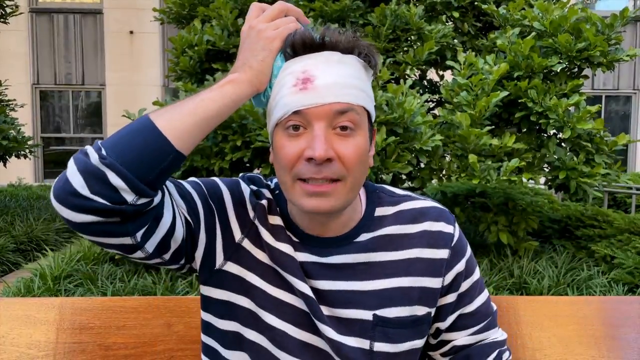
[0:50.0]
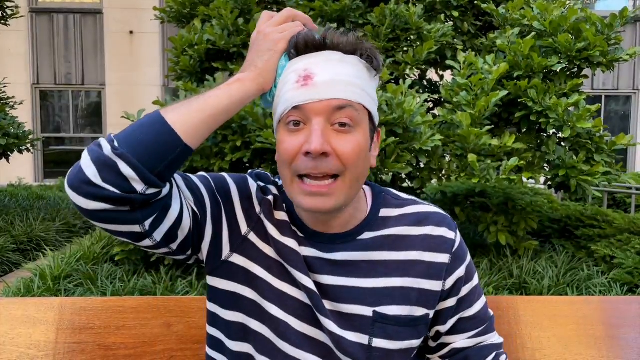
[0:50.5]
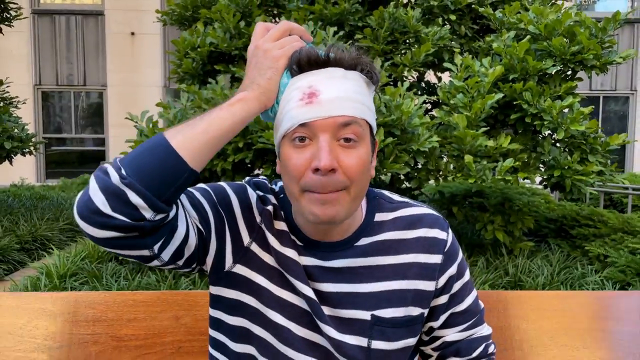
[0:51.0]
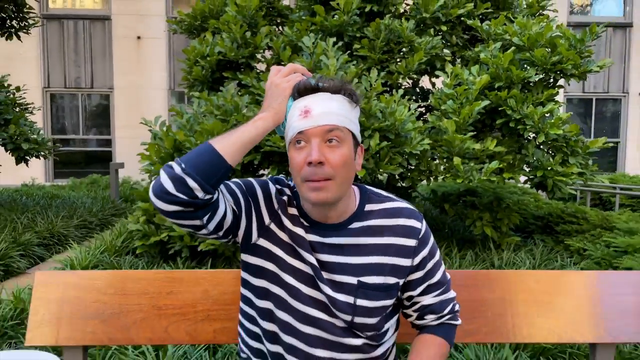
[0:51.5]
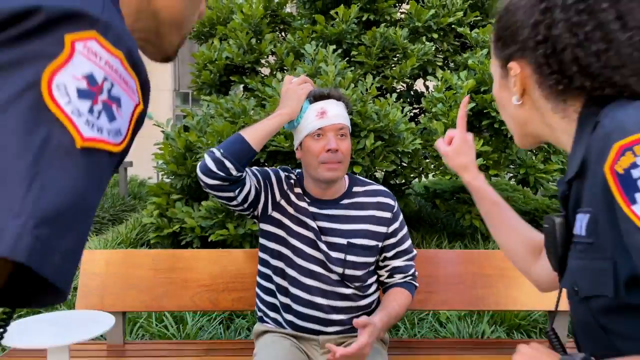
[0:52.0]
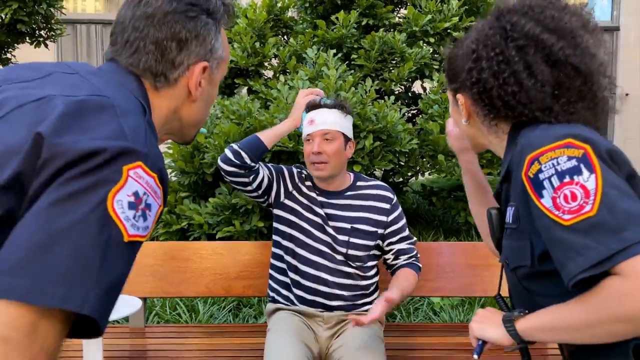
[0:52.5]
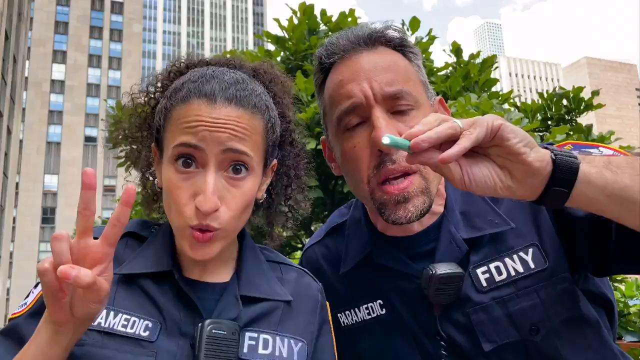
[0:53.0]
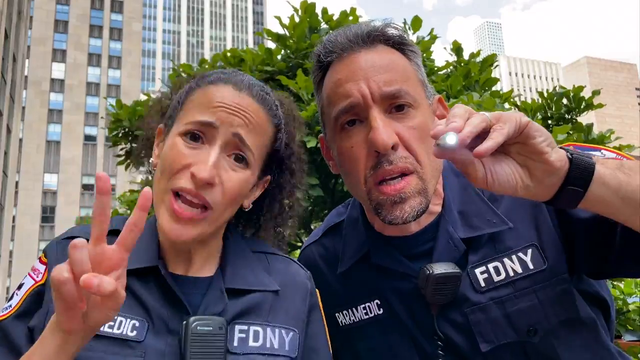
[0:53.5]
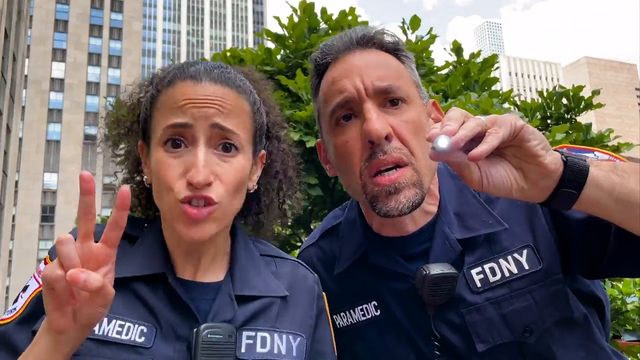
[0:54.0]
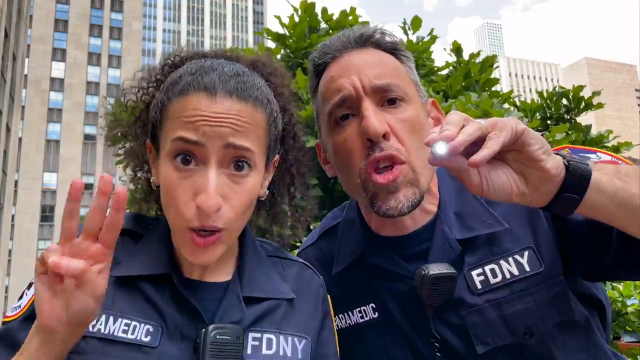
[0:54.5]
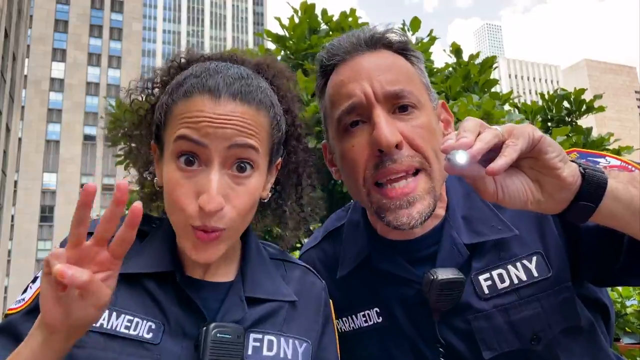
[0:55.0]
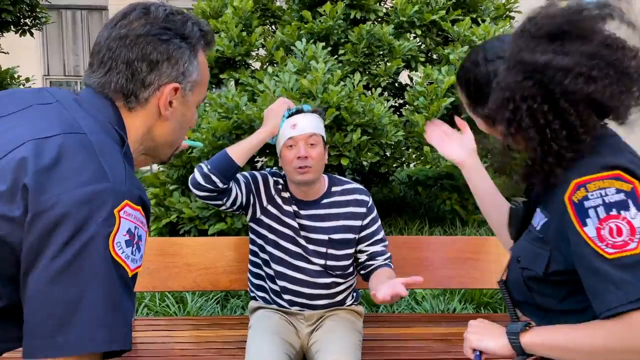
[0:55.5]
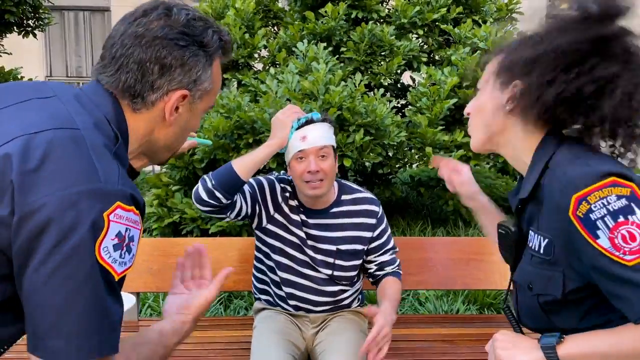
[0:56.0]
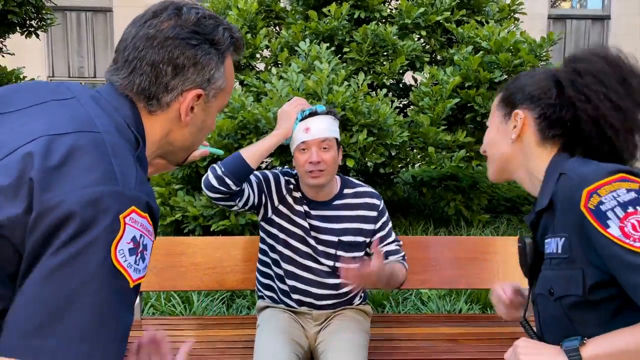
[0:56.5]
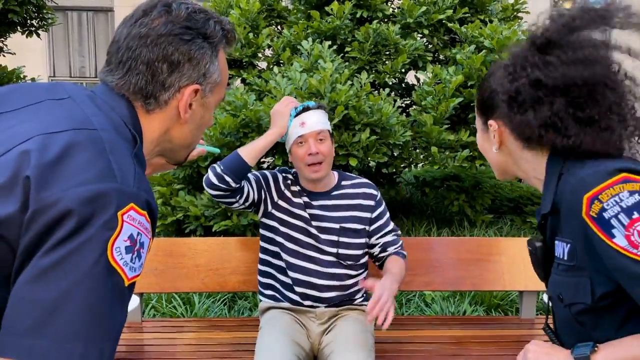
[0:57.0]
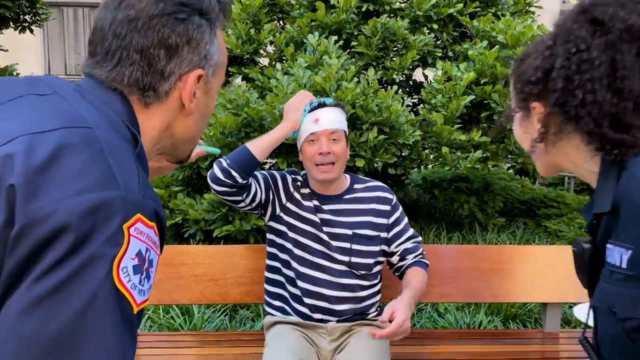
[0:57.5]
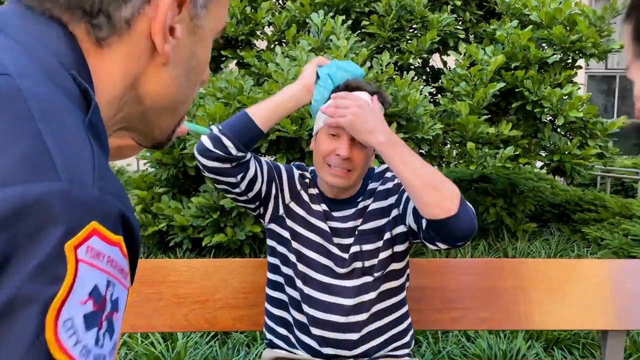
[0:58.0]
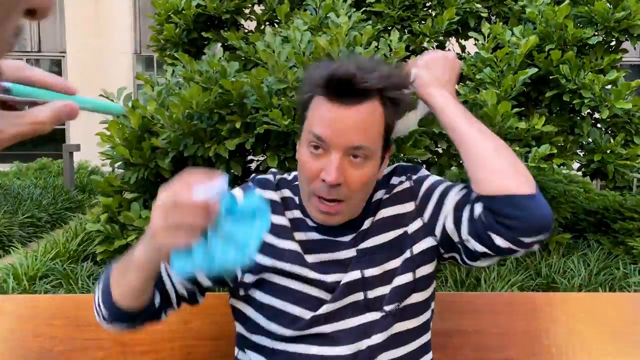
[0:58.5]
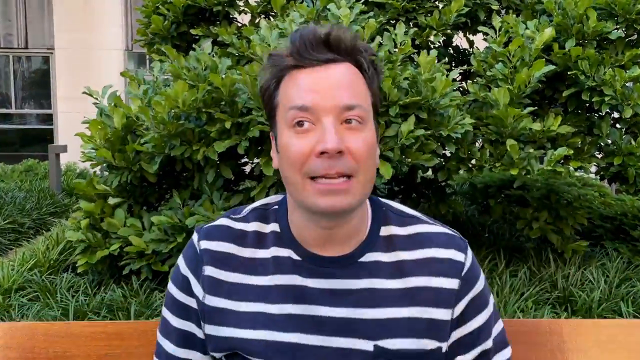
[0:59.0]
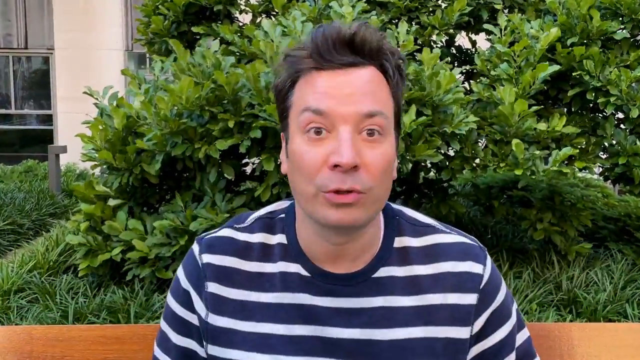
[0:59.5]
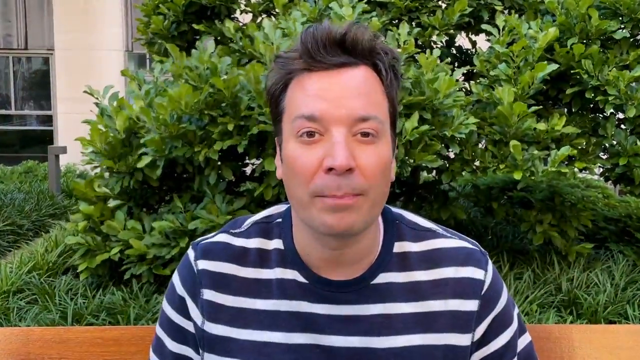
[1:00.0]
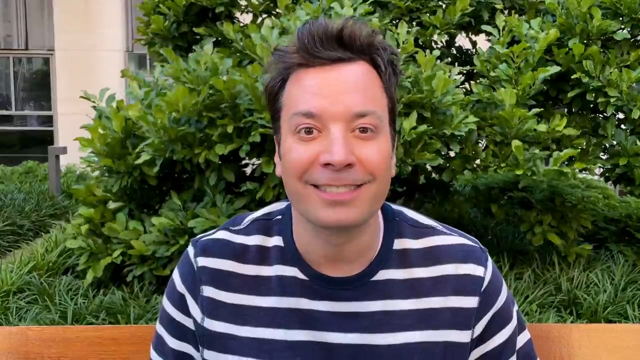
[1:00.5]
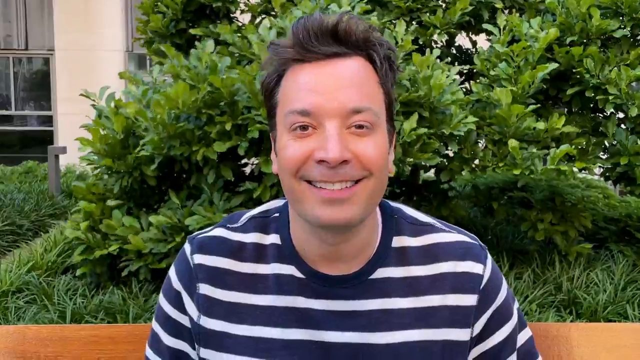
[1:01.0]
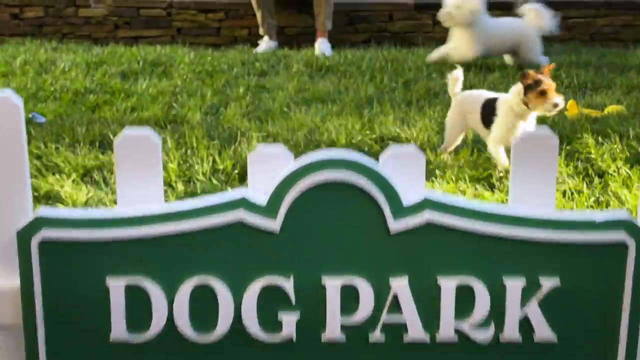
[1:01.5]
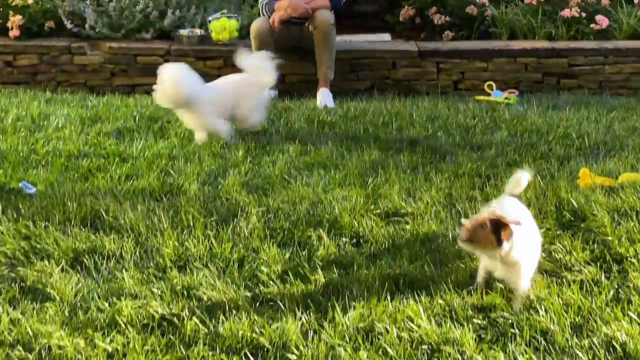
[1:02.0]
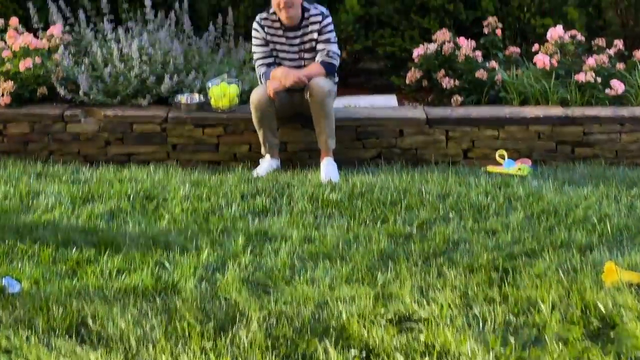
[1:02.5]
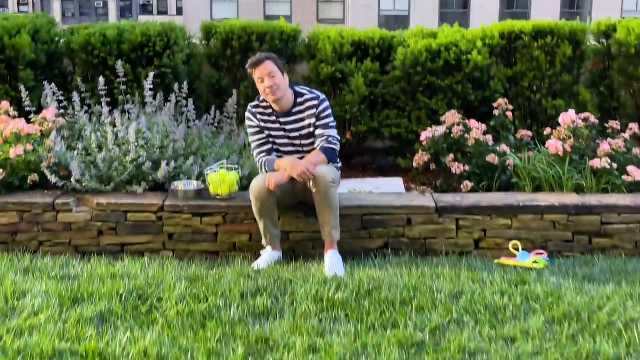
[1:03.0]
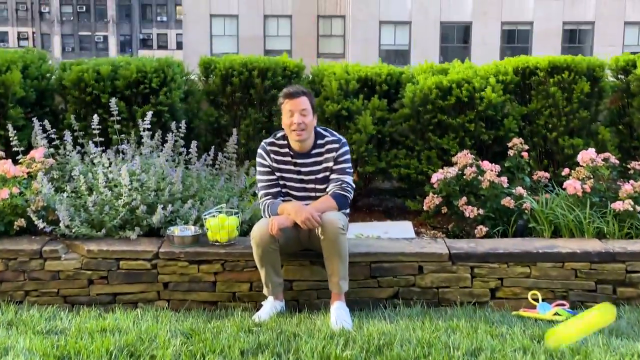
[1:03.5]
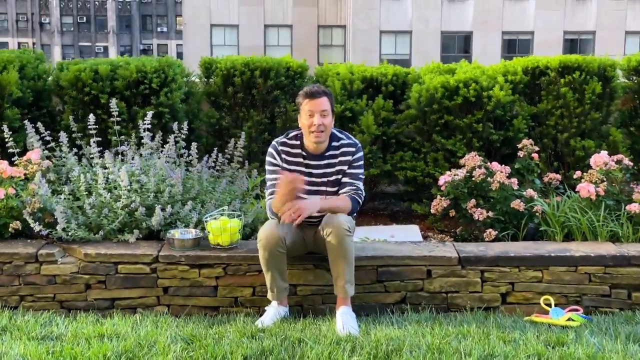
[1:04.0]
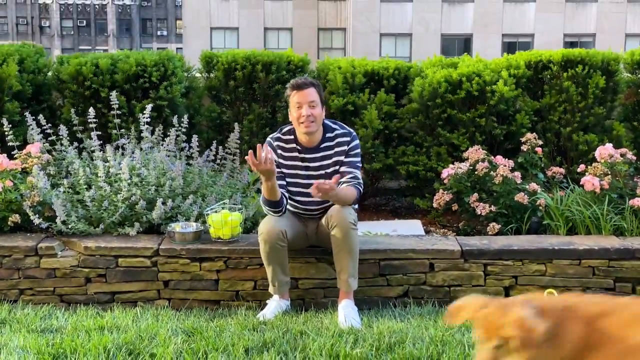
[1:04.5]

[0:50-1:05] A man sits on a wooden bench out in front of a house or building. He wears tan pants and a white and dark blue striped long-sleeved shirt, has a white bandage wrapped around his head, and holds a bag of ice on top of his head with his right hand as he talks. The camera pans to two paramedics, a male and a female, standing there talking to him and asking him questions. One holds a little light to look at his eyes. The woman holds up her fingers and asks him how many she is holding up: two, and then she says three. The man pulls the mask or bandage off his head and throws it down. The video then moves to another scene where the same man sits on a wall at a dog park with grass in front of him, watching dogs play: a small white dog with short hair, a bigger white dog with curly hair running around right past him, and what looks like a golden retriever.